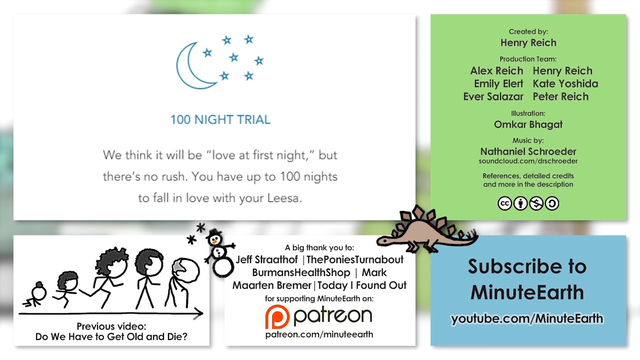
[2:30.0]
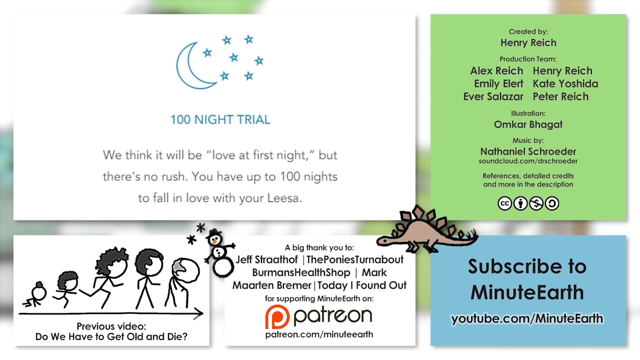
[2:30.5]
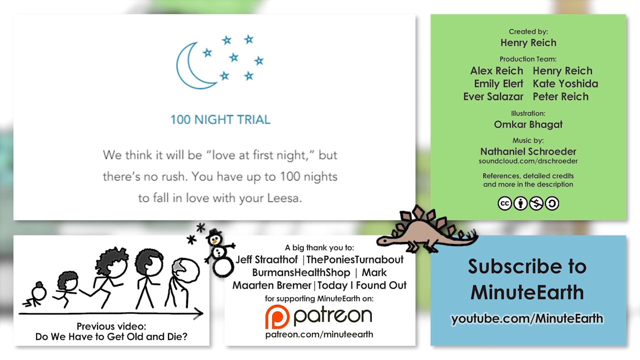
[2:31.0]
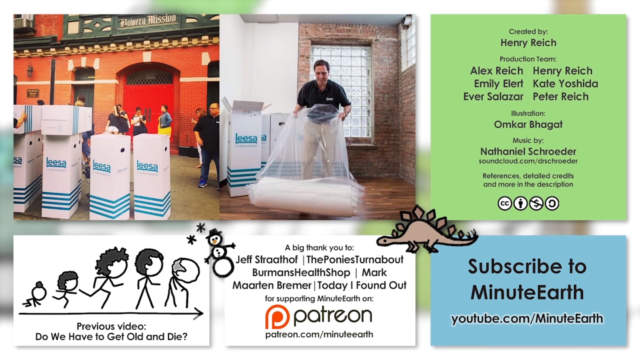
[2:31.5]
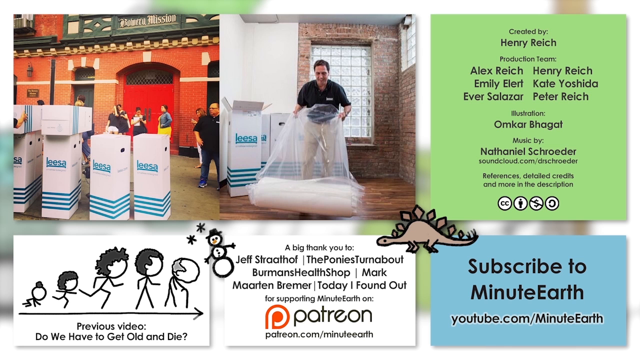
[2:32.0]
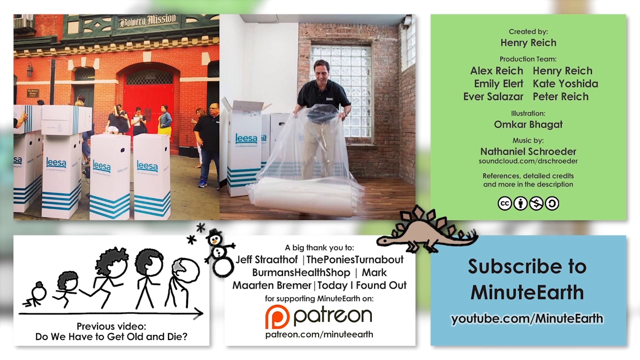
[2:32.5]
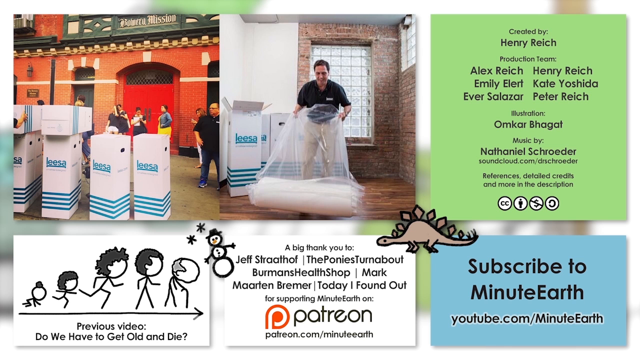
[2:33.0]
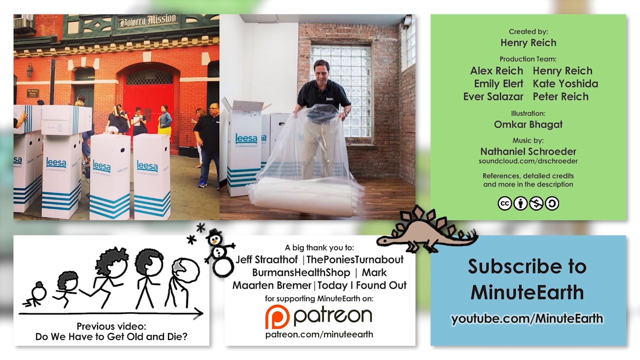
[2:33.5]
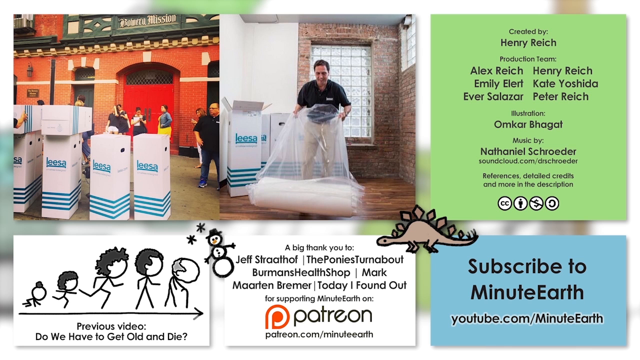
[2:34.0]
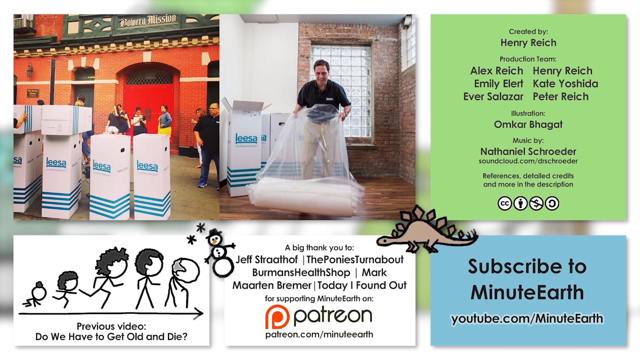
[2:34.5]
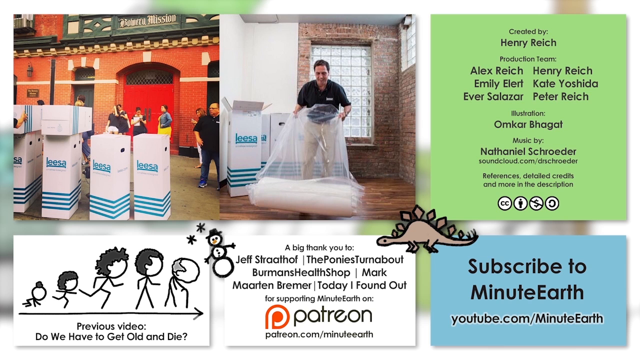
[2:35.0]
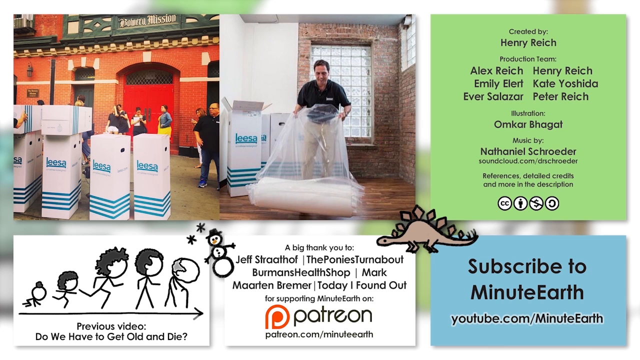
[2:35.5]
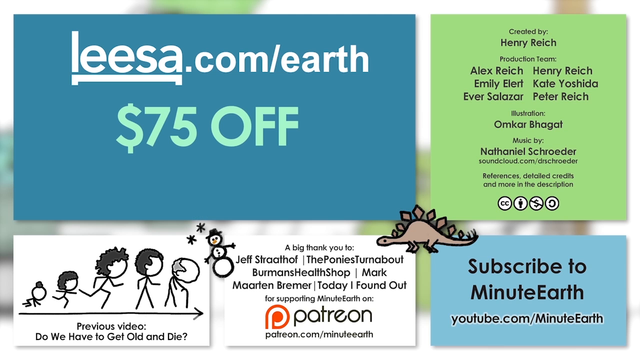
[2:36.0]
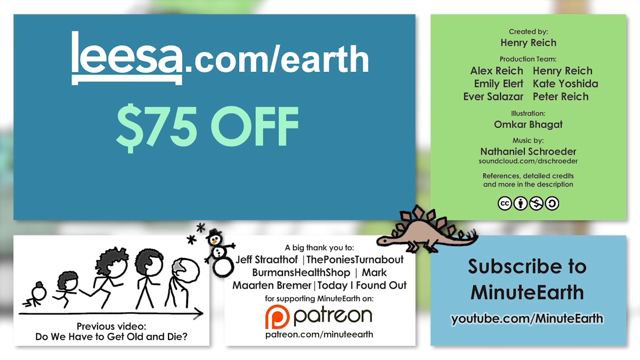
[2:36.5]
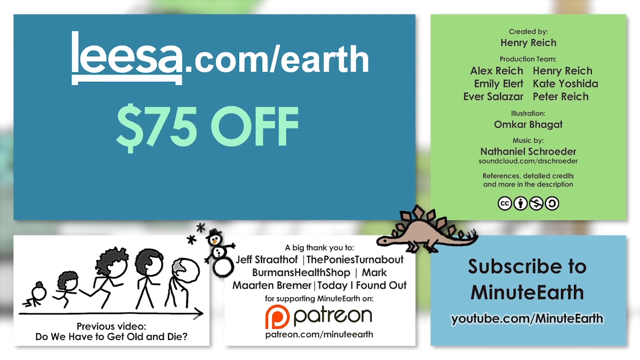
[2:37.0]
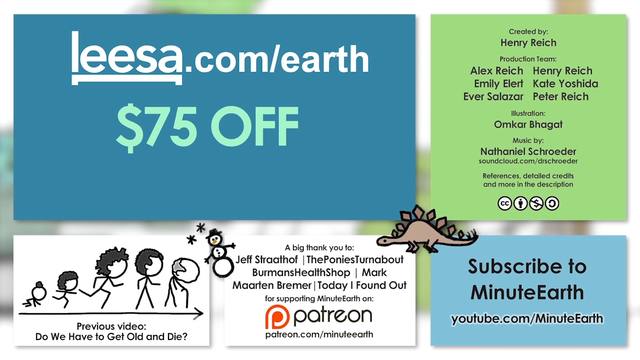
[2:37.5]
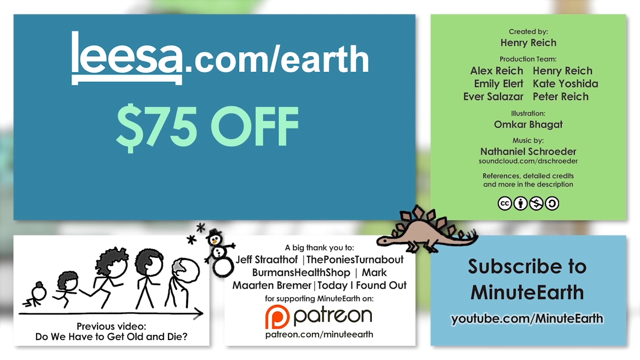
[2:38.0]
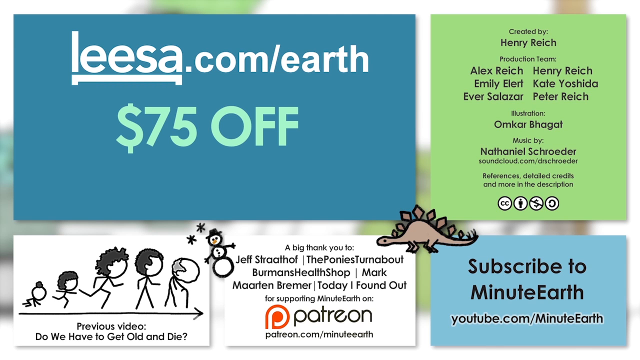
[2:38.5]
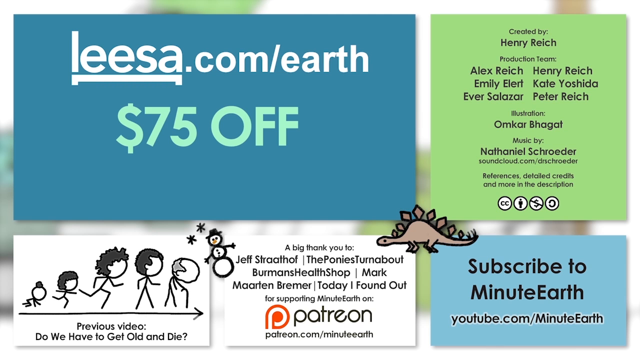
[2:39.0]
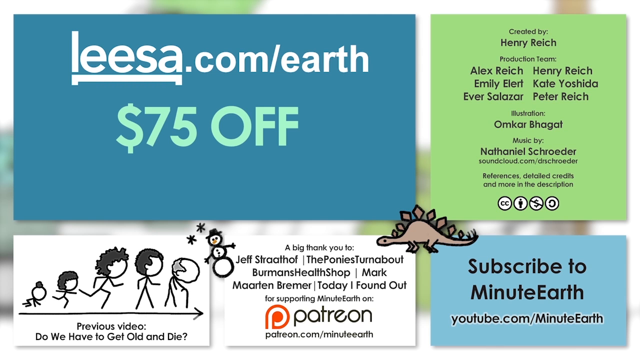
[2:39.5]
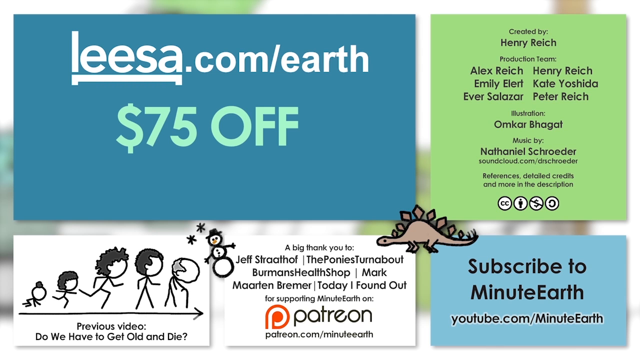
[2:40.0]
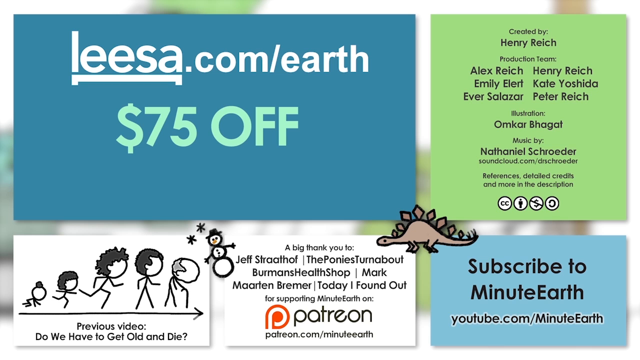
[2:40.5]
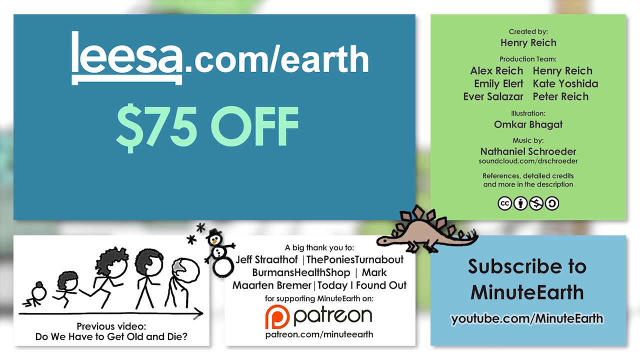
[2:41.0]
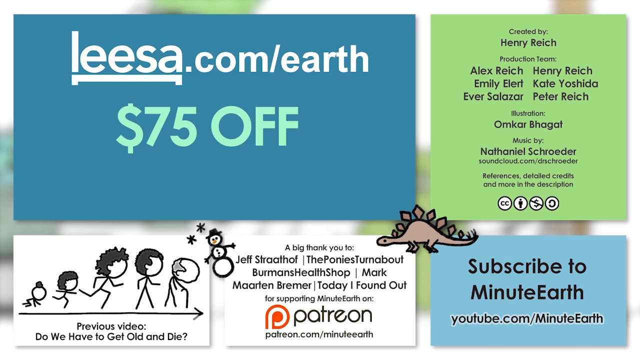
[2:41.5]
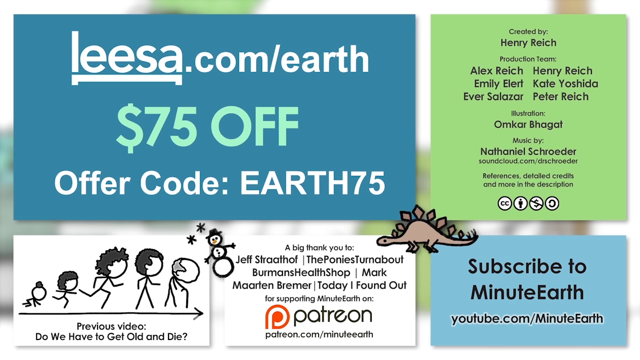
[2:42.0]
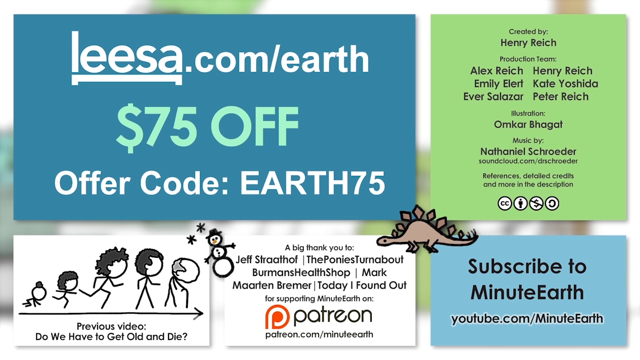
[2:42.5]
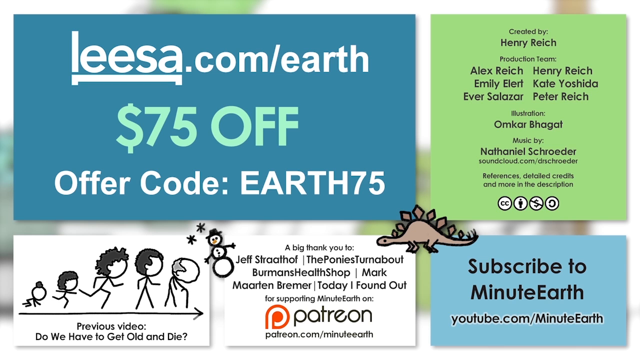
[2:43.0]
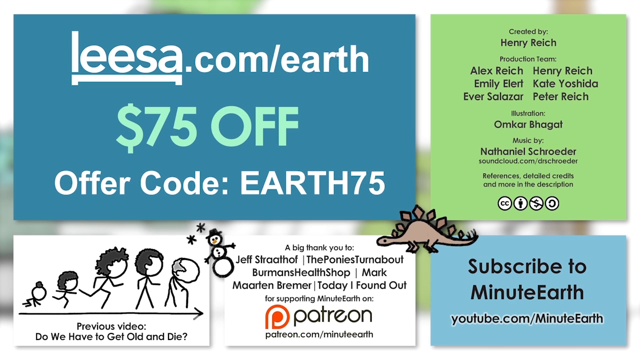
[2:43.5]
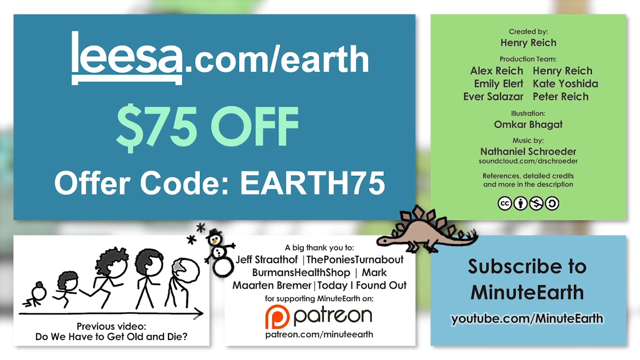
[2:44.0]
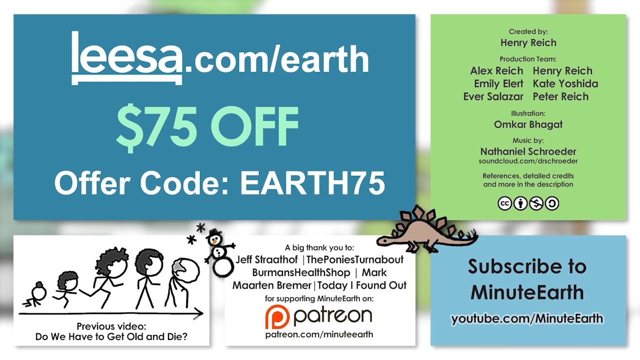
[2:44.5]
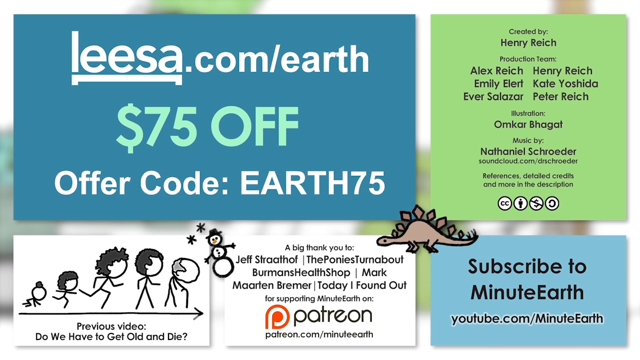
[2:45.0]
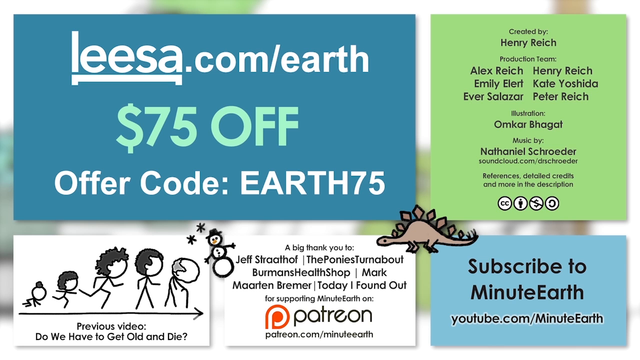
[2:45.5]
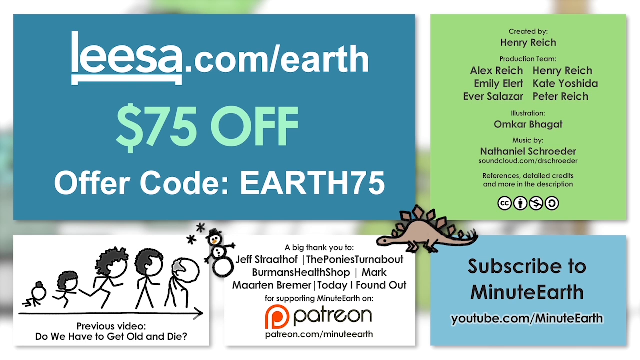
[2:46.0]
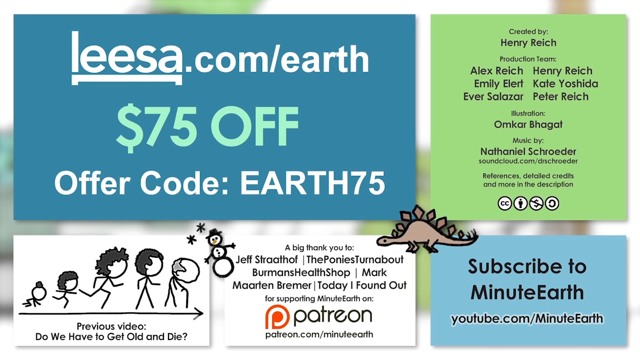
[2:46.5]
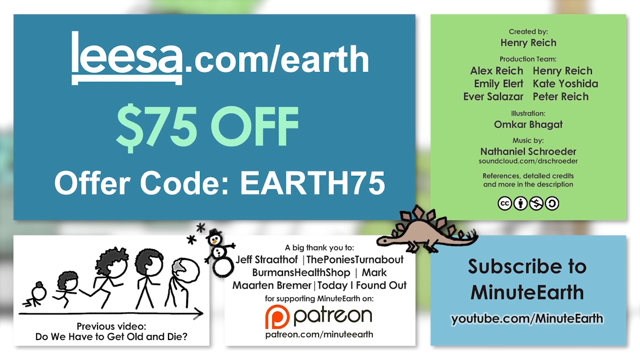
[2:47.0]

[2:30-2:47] A square contains an advertisement showing several Leesa boxes with mattresses inside, and loads of people, maybe collecting the boxes or storing them, outside a building with a massive red door. On the right-hand side, a man inside a house, wearing light-coloured trousers and a dark short-sleeved t-shirt, takes out one of the mattresses in a clear bag and seems happy. A green square then says "leesa.com/earth $75 off", with "$75 off" in light green, and "offer code EARTH75" at the bottom. Other boxes are on the screen: a green box, a blue box, a white box with Patreon and another white box showing the previous video. Text says "subscribe to MinuteEarth, youtube.com/MinuteEarth", with a picture of a brown dinosaur and a white snowman.